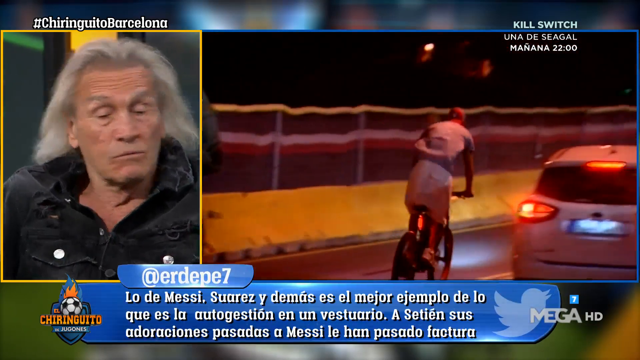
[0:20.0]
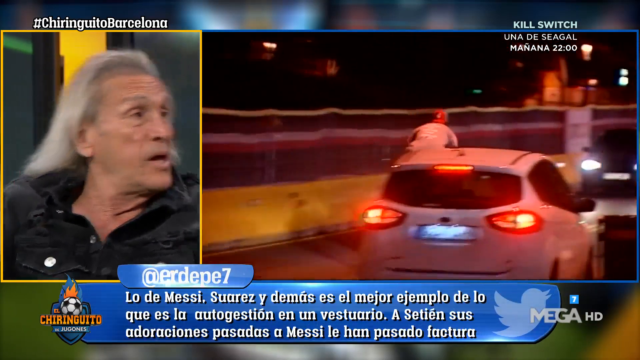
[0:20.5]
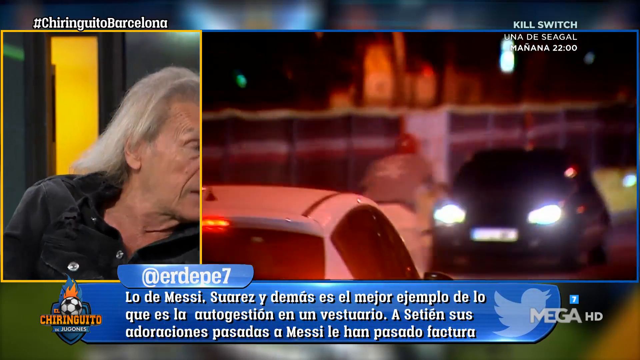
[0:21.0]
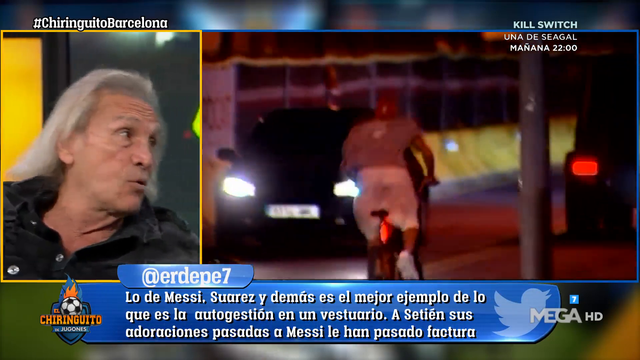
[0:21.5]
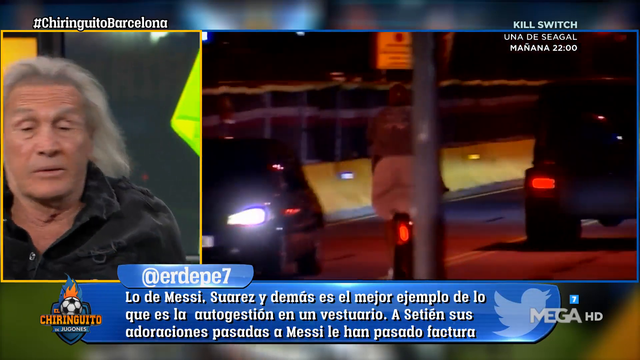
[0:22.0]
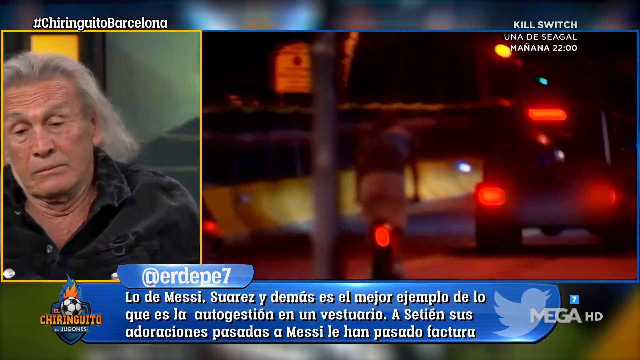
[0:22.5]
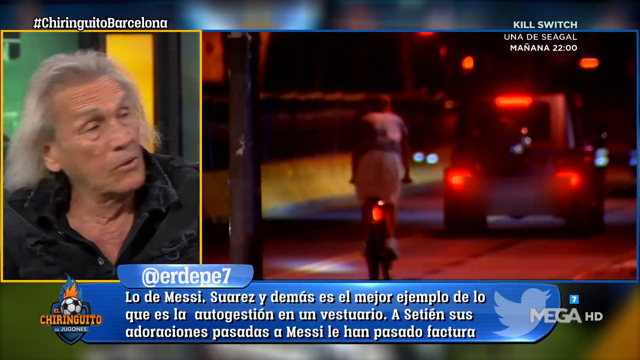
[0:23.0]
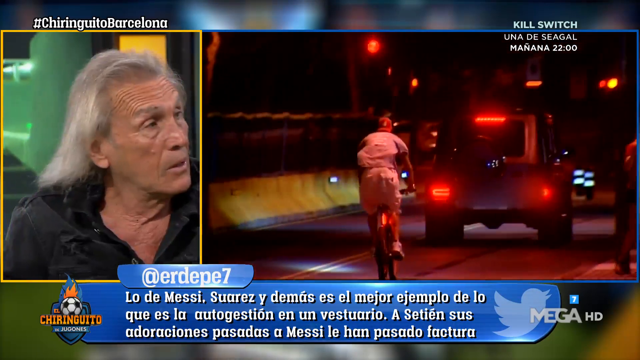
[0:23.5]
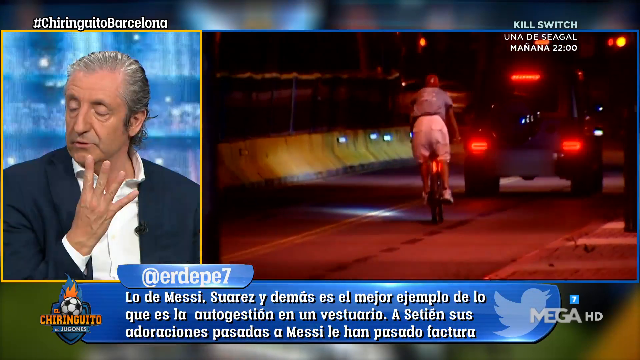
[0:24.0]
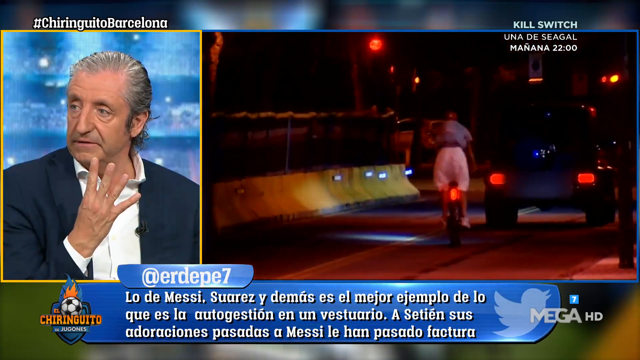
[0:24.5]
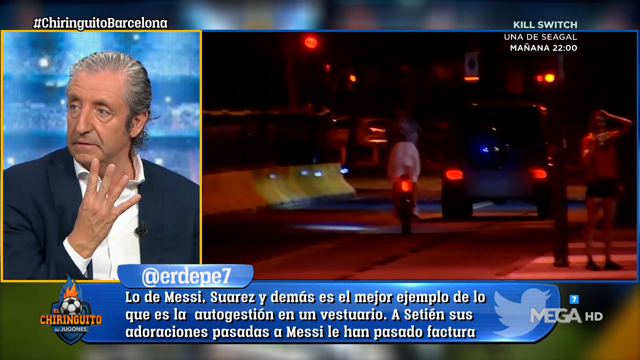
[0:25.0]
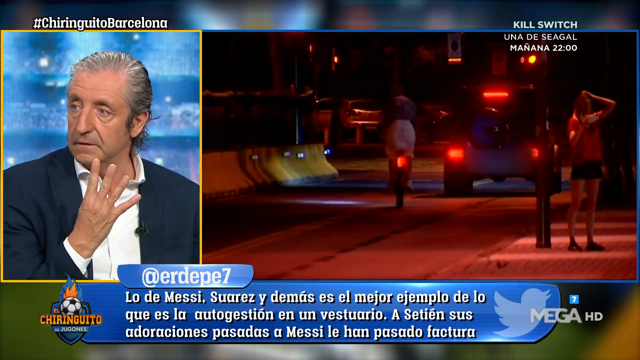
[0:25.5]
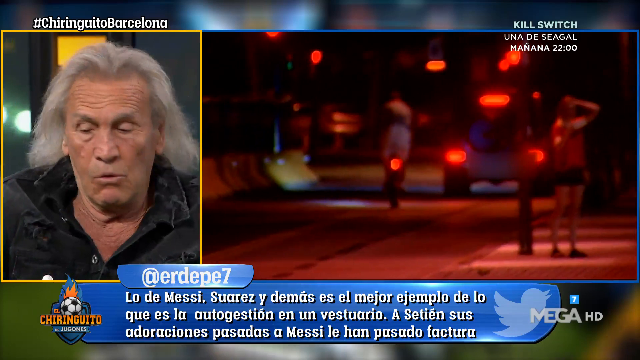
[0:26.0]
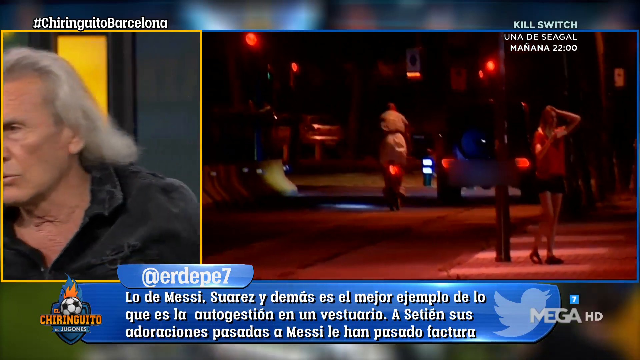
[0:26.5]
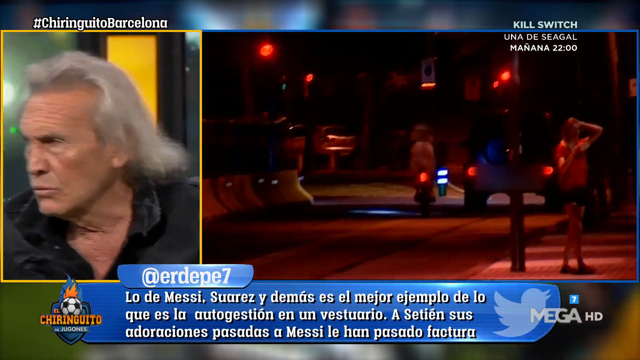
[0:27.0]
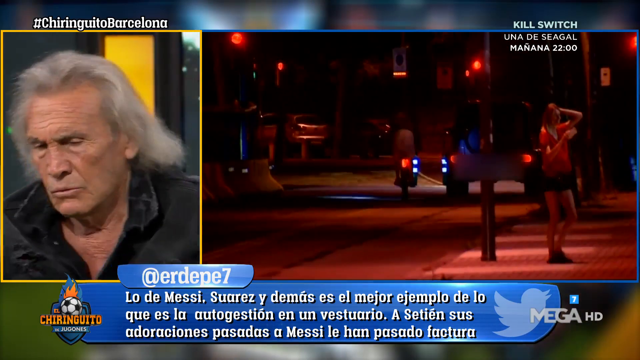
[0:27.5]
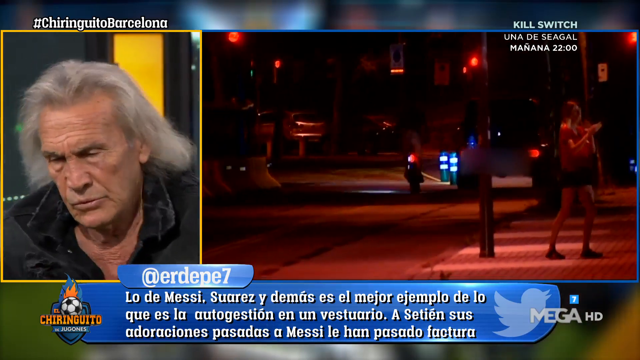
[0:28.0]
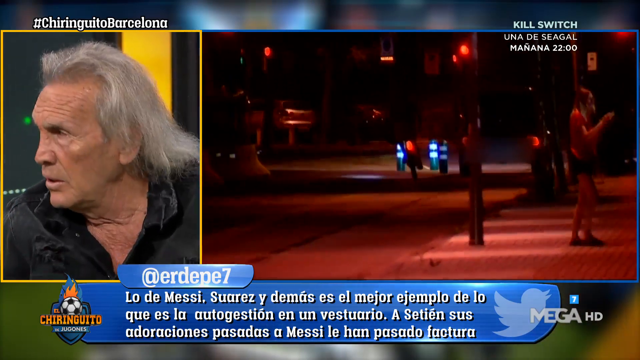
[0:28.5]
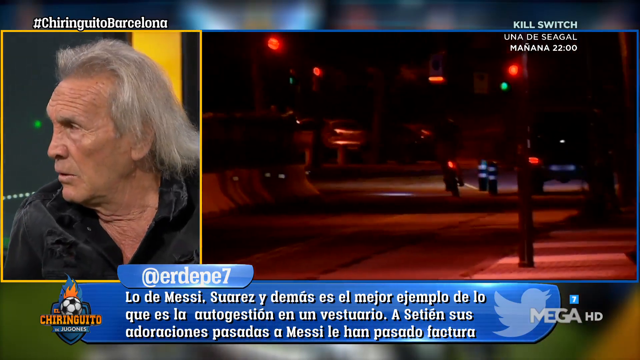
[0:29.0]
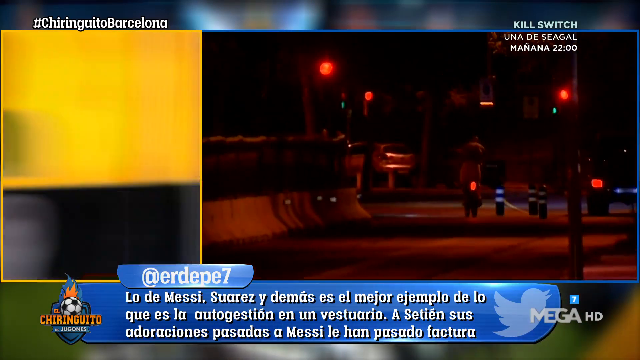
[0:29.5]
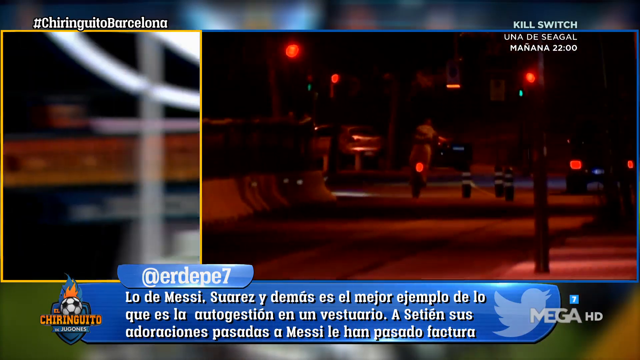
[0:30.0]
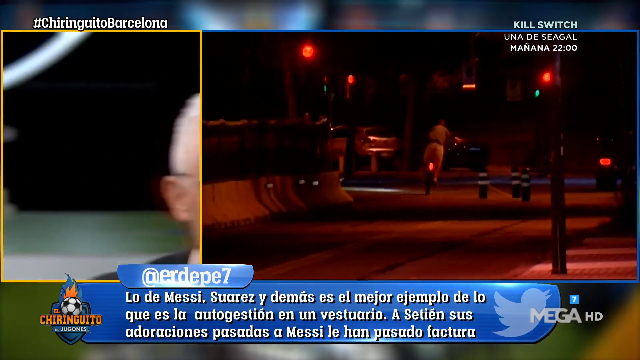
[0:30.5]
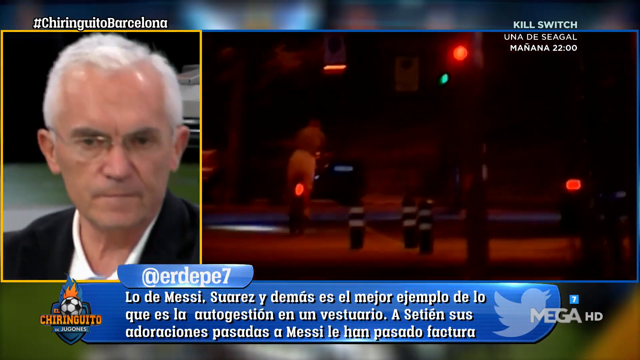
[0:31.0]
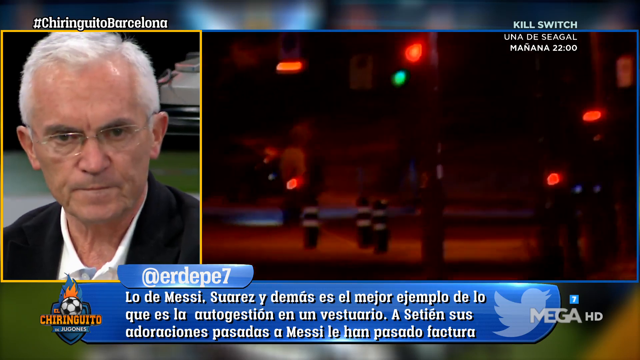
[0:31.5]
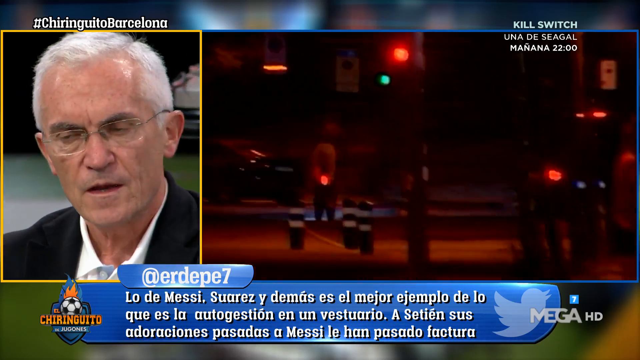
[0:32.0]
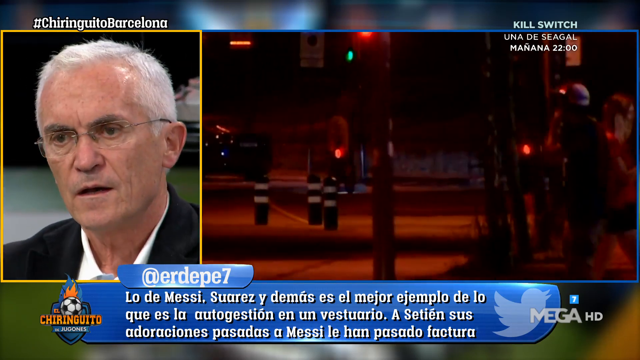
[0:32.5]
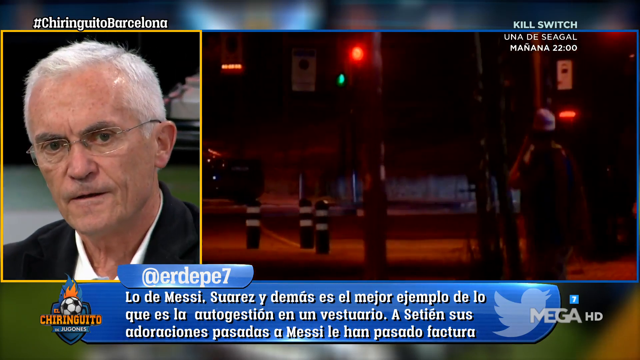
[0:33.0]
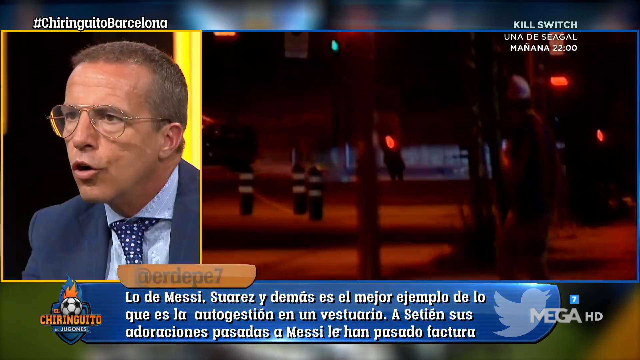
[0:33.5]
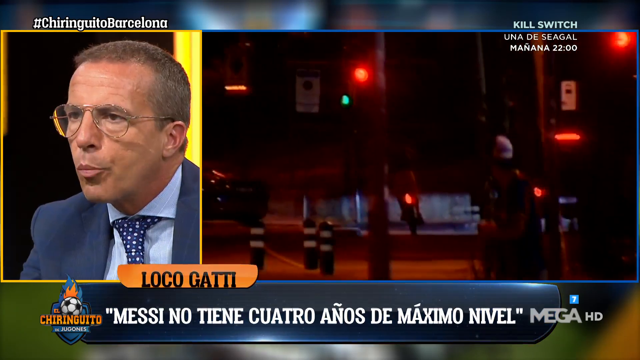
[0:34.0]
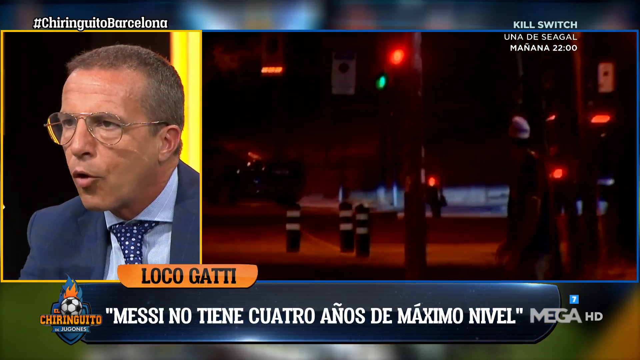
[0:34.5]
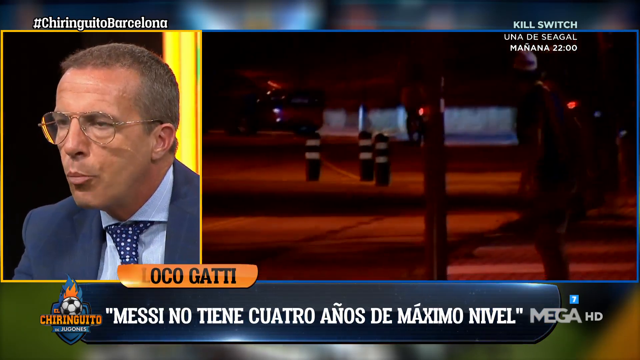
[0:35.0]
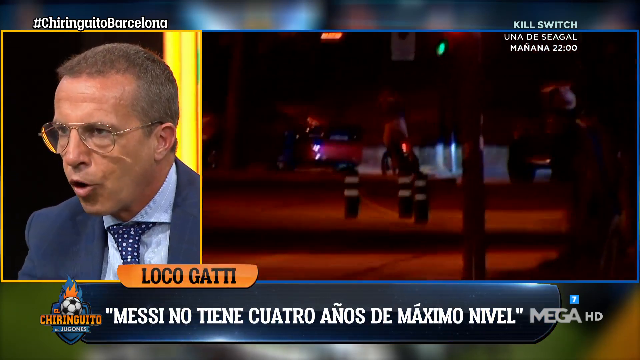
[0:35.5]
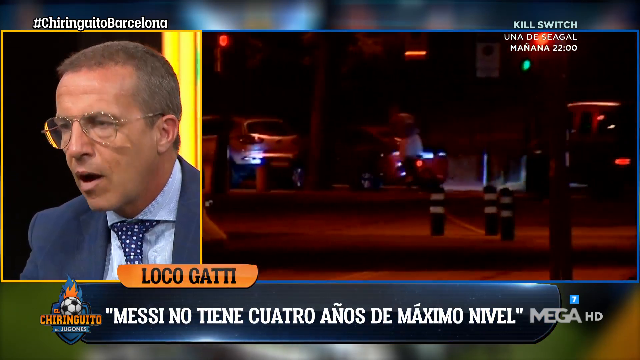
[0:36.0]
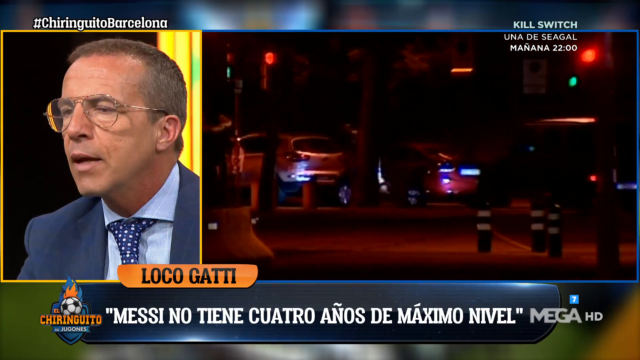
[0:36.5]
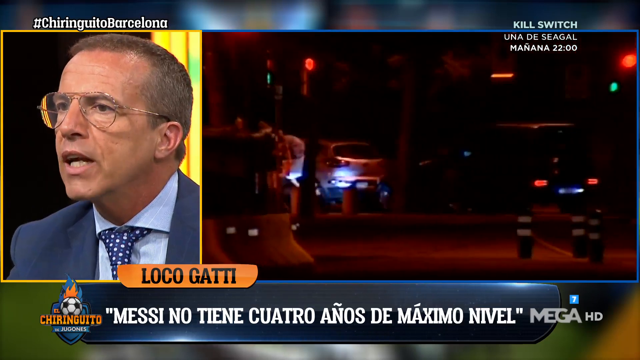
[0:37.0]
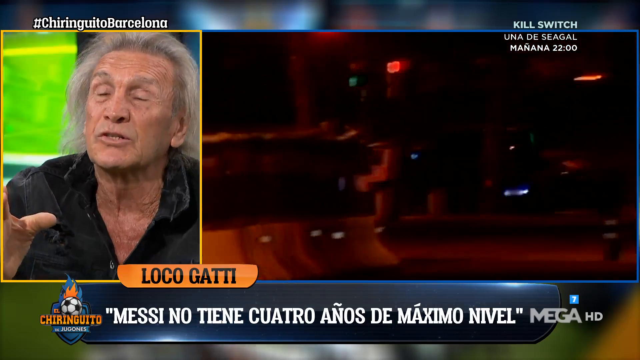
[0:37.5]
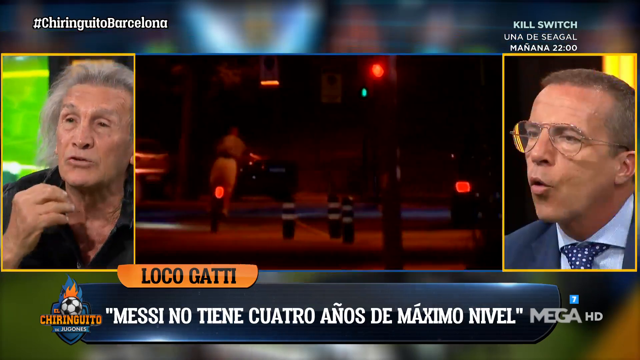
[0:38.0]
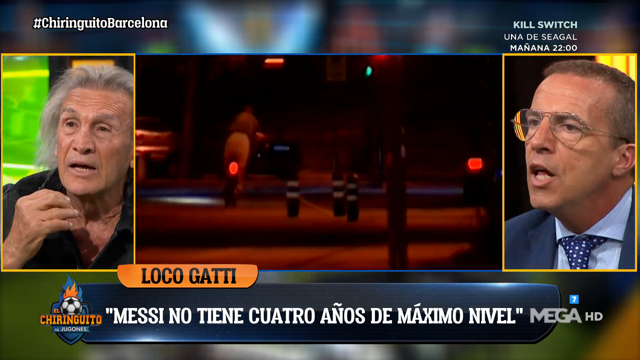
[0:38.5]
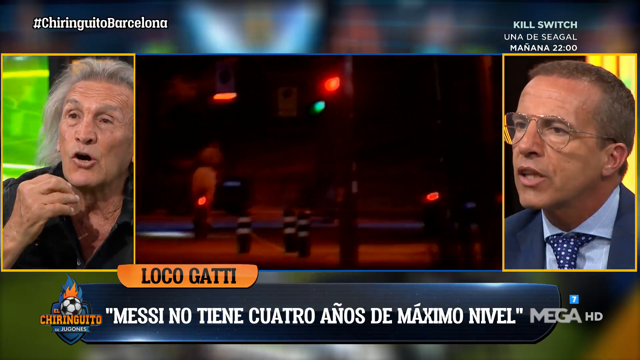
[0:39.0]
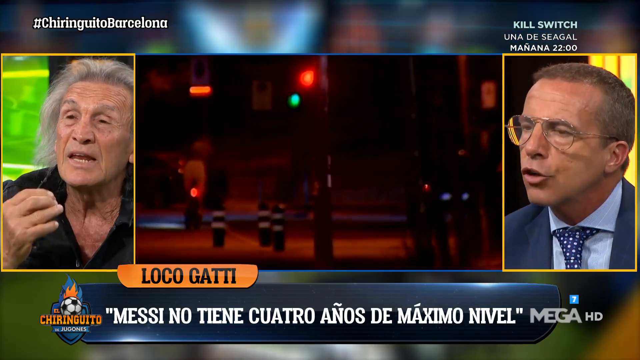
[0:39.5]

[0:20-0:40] The news report continues on a split screen. On the right, a bicycle rider rides quickly down the street at night behind a black jeep and then disappears into the darkness, though the bicycle's taillight remains visible as it goes off into the distance. At first the rider seems to be following the jeep, but afterward the jeep appears to be following him, and the bicycle looks like it is following a black SUV. On the left, several different men talk in a news studio. One of them has long gray hair and is very animated: he moves back and forth in his seat, rocks in his chair, looks in different directions, and his facial expressions make him look like he could be upset about something.